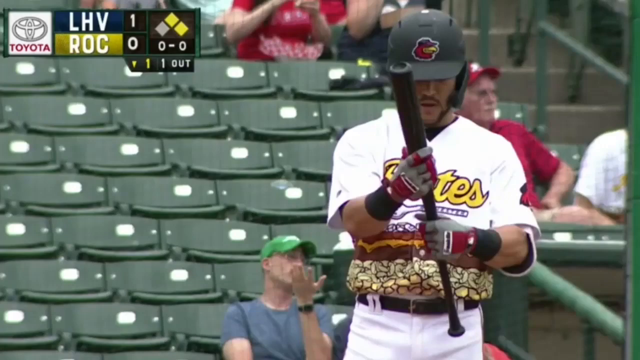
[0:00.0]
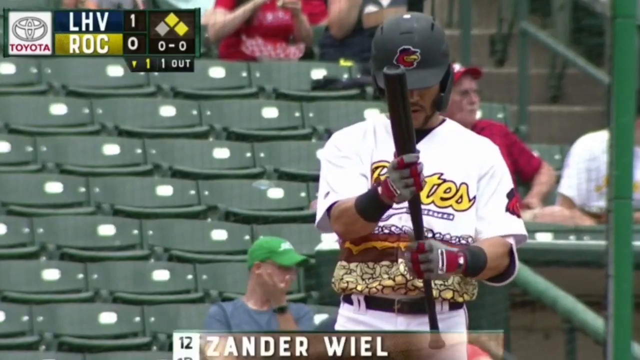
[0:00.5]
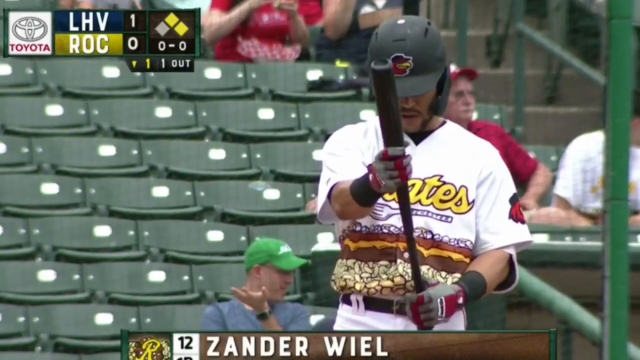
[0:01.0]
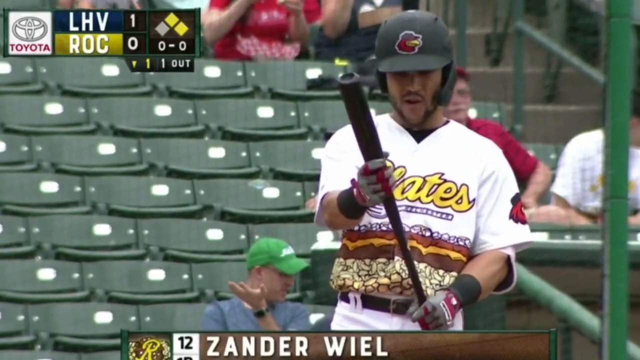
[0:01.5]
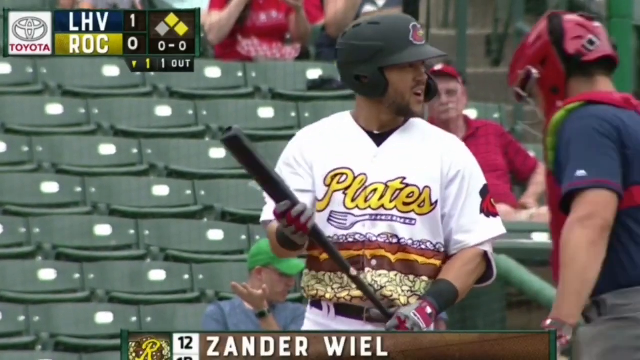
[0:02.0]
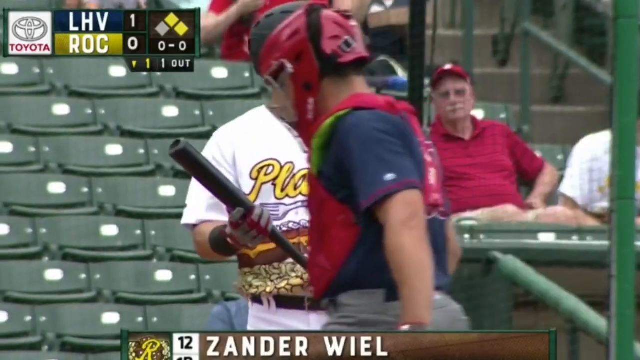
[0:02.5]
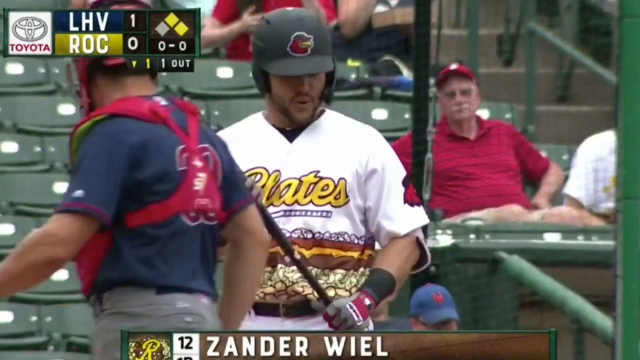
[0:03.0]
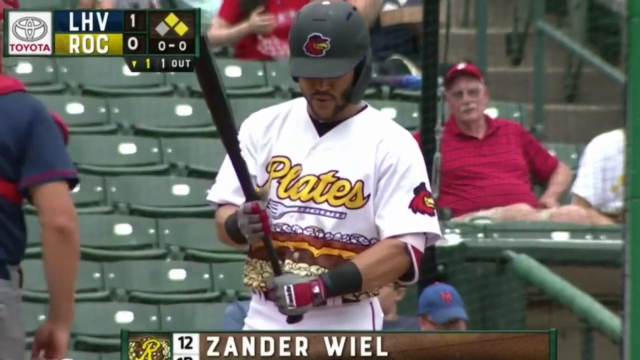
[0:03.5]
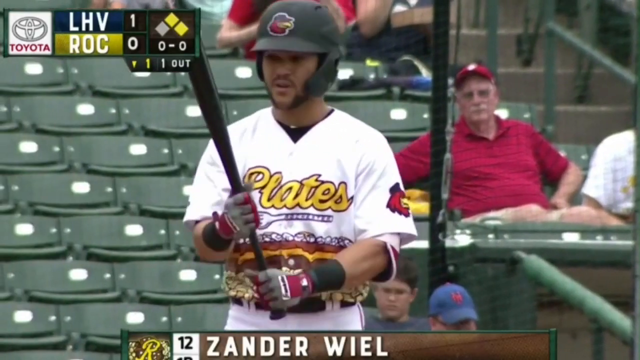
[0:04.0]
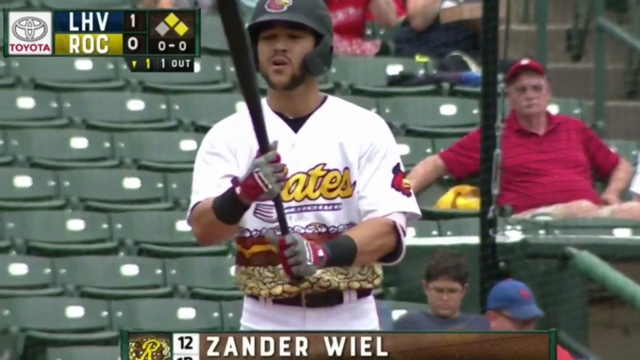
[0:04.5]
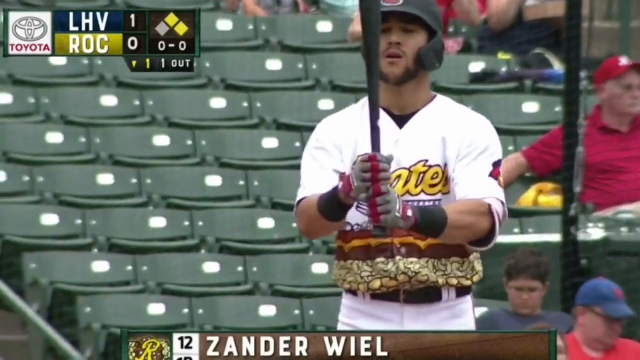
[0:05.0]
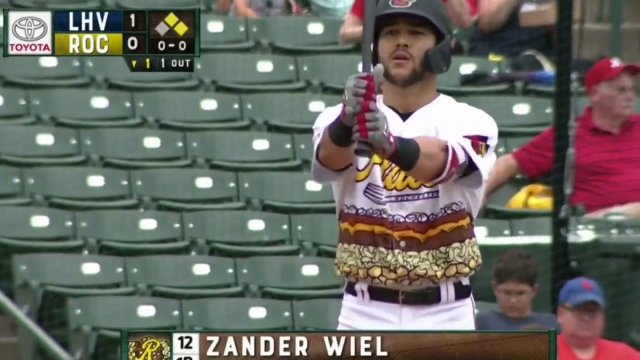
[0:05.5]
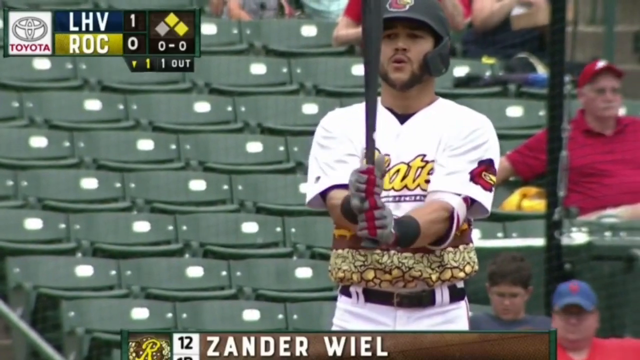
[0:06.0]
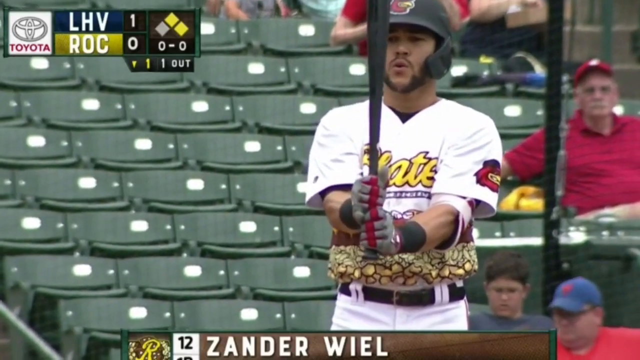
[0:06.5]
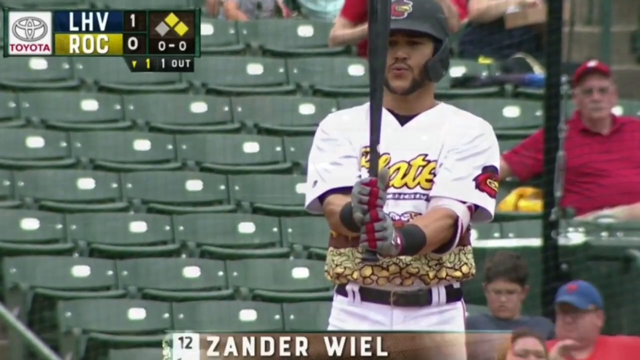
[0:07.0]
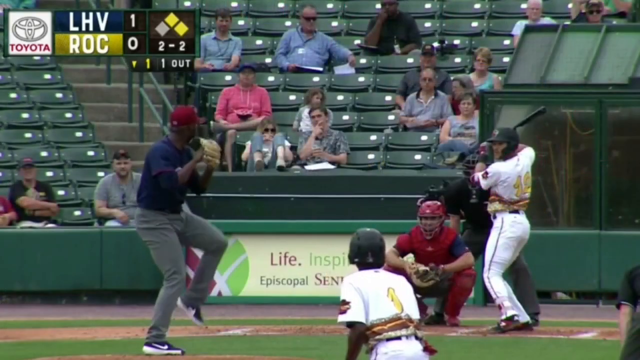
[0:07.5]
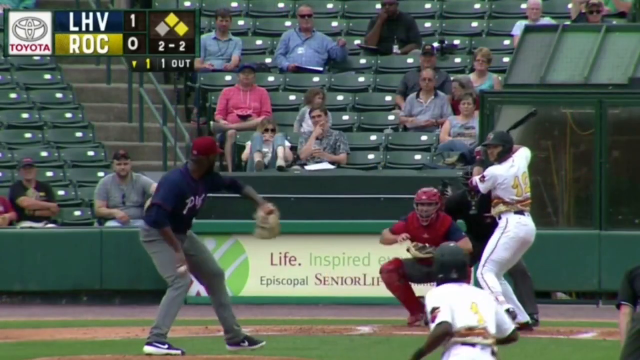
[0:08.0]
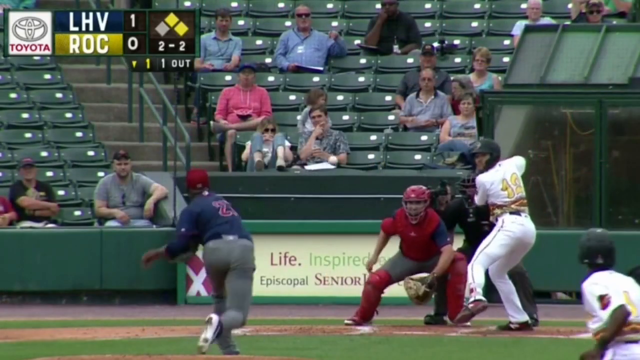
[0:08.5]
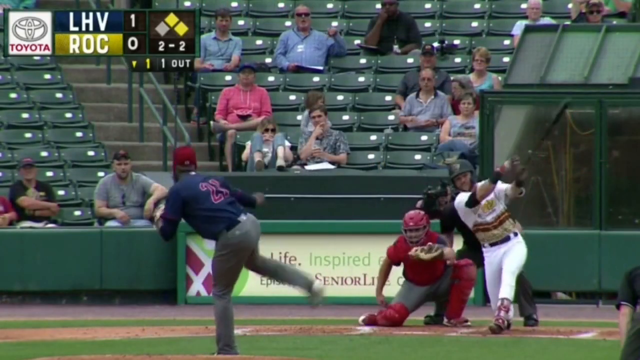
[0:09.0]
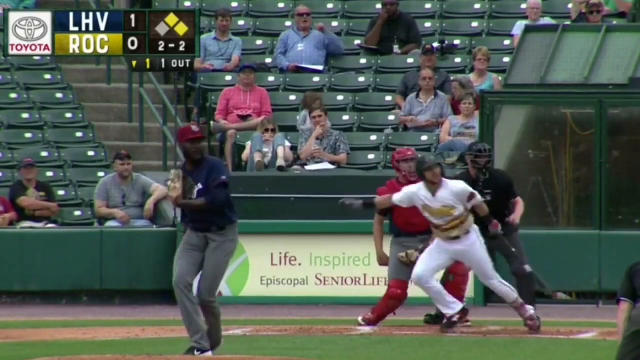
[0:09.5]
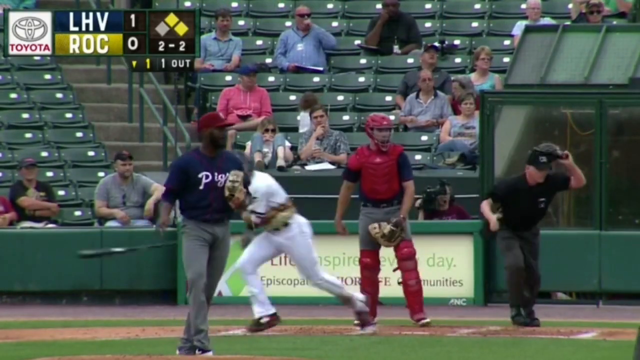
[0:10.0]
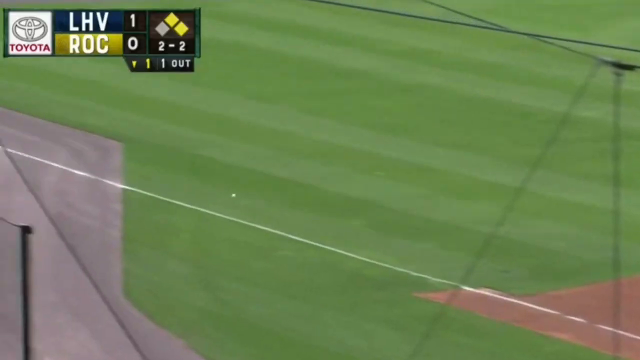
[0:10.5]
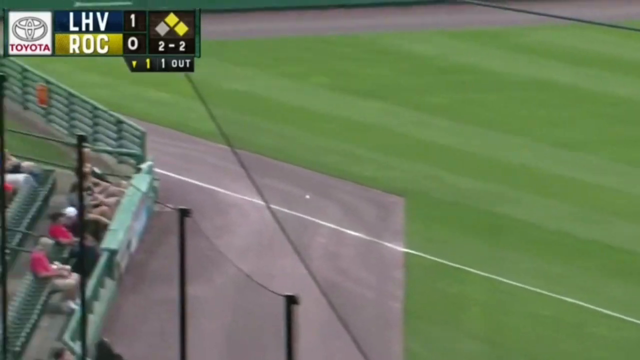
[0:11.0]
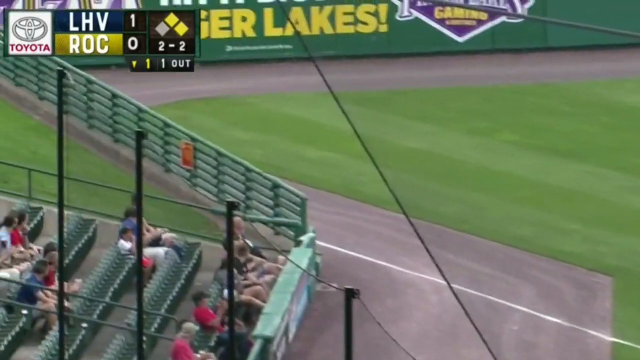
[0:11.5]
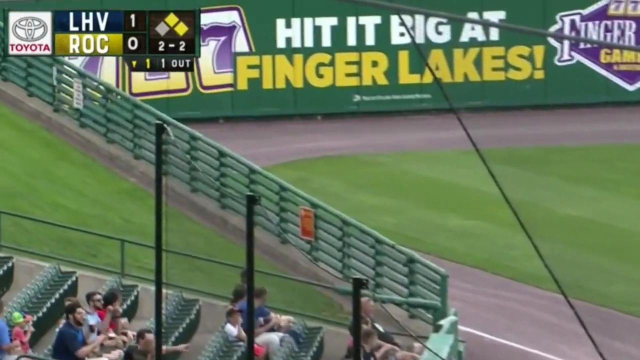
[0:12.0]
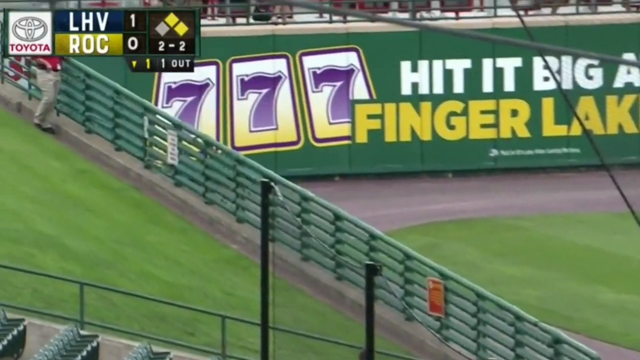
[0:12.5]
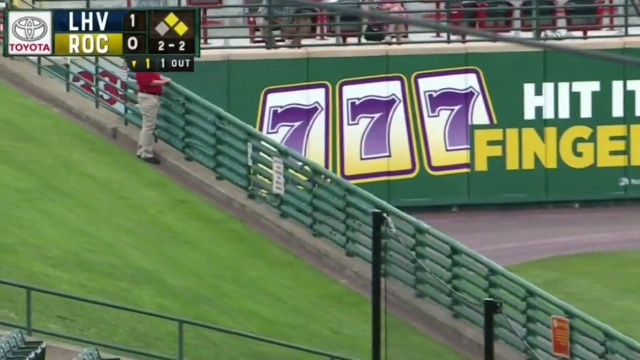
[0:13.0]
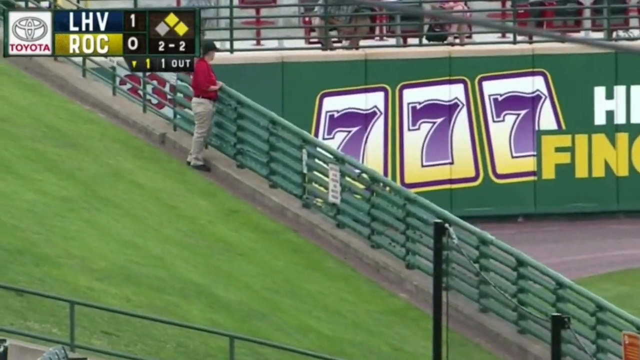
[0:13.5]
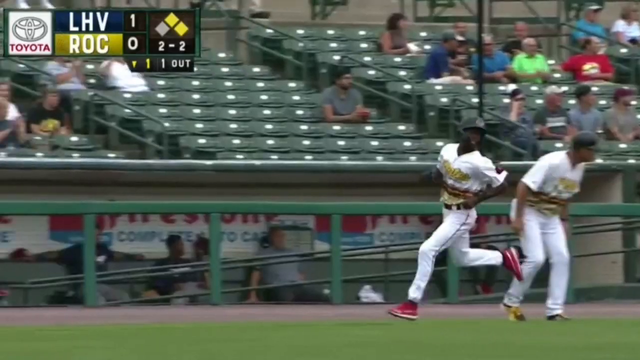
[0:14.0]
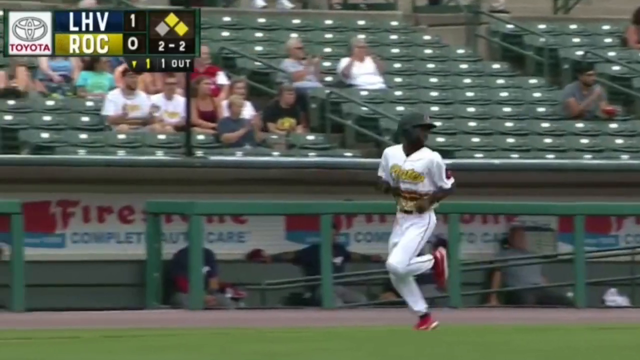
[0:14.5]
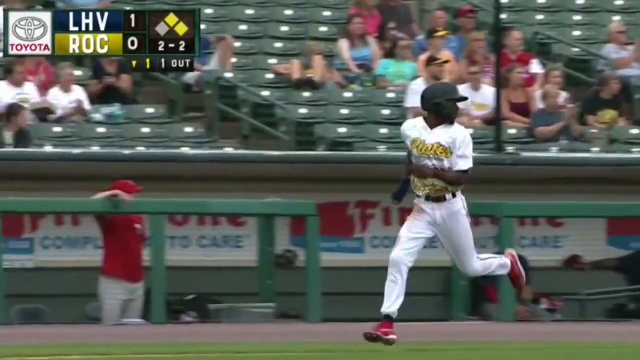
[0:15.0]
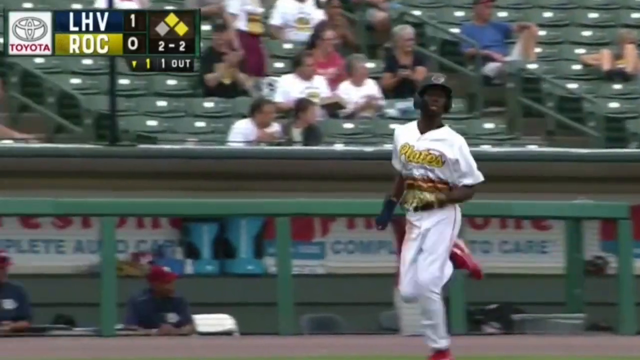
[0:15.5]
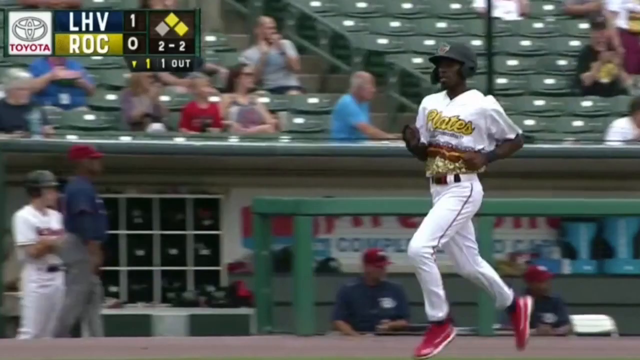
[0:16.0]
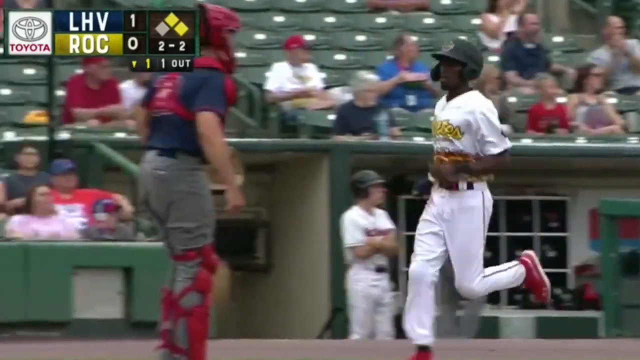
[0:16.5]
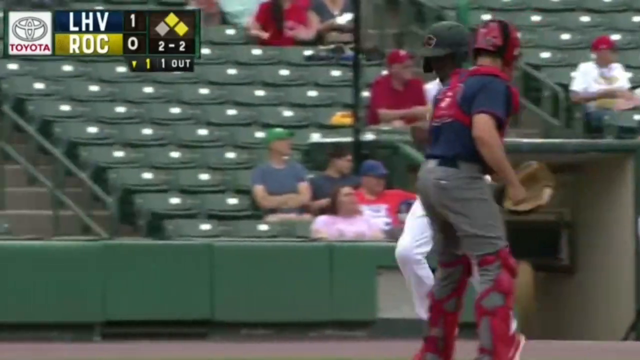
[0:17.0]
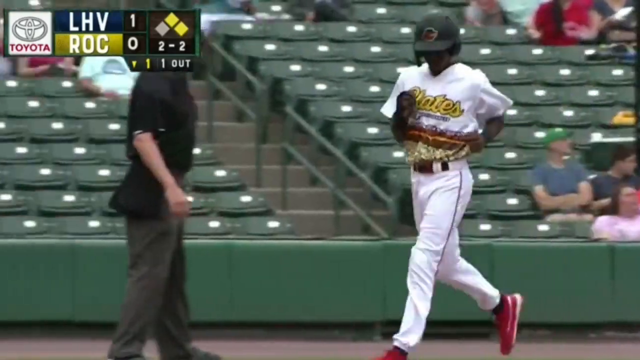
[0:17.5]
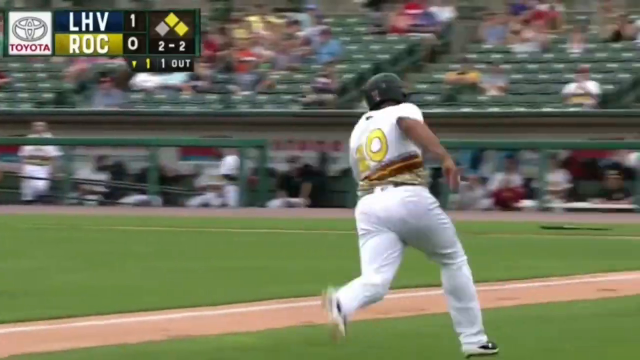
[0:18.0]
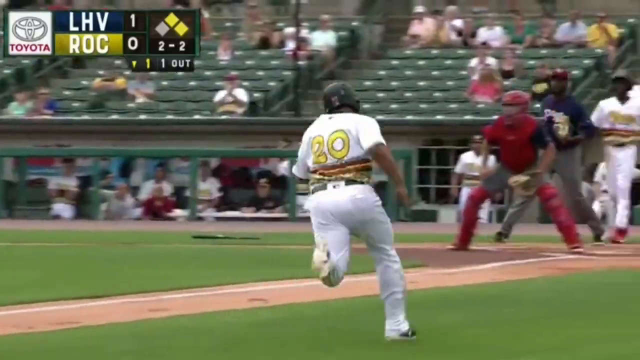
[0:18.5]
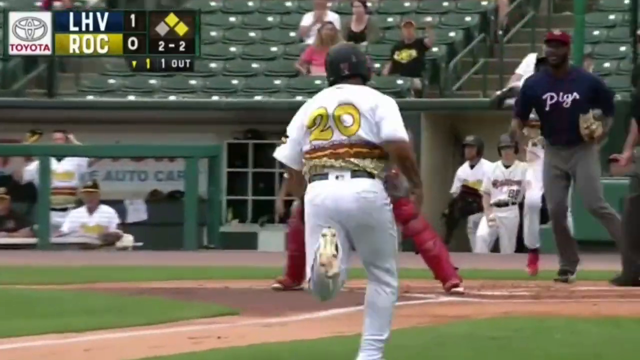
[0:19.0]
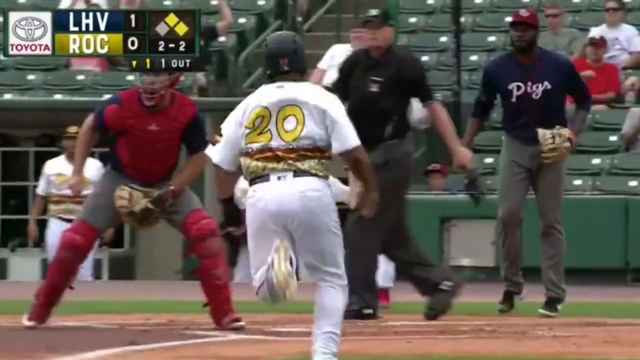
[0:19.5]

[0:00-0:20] A baseball player in a baseball jersey holds a black bat at the plate. In the top left corner of the screen, a scoreboard reads "LHV" 1 vs "ROC" 0. The player is playing for the Cardinals and tries to hit the ball. Behind him are many empty green chairs, and a number of people show consternation about the player in the center of the screen.